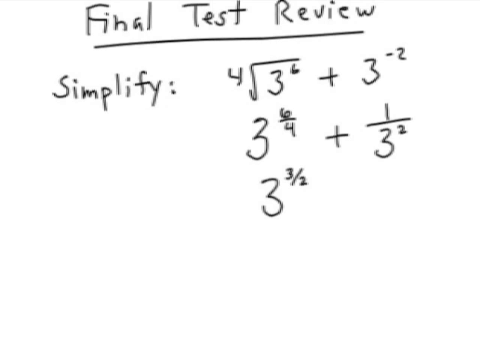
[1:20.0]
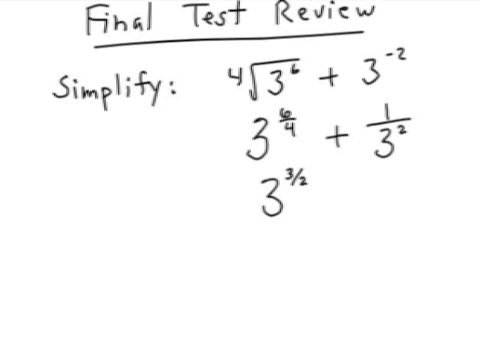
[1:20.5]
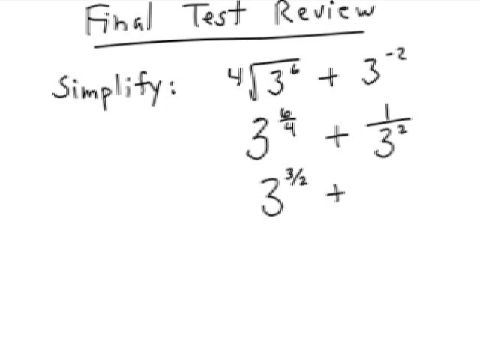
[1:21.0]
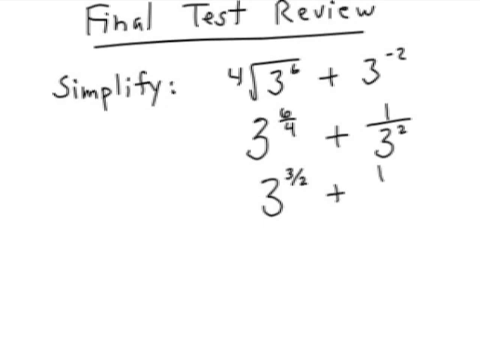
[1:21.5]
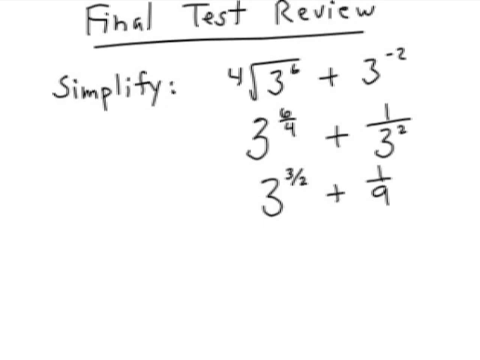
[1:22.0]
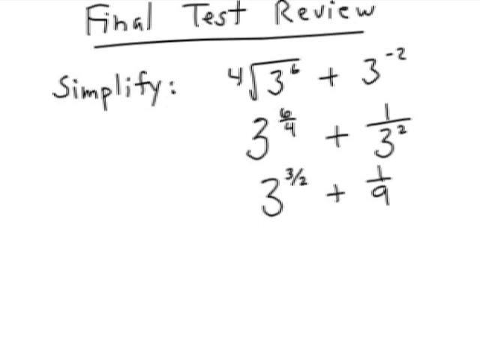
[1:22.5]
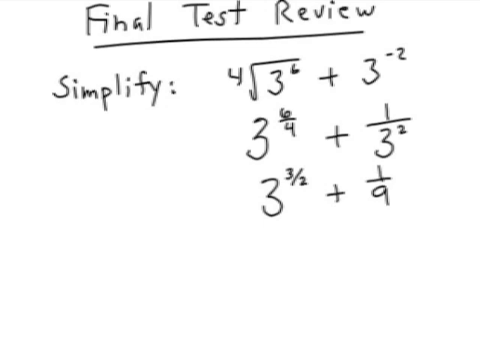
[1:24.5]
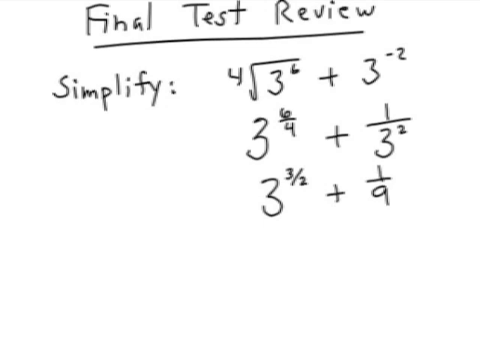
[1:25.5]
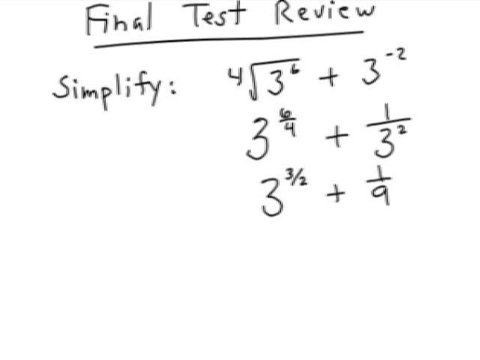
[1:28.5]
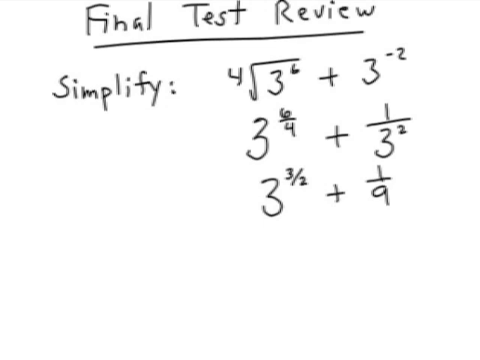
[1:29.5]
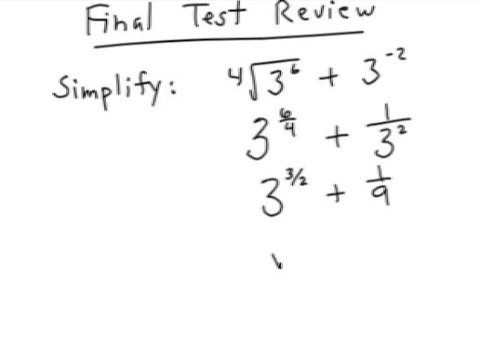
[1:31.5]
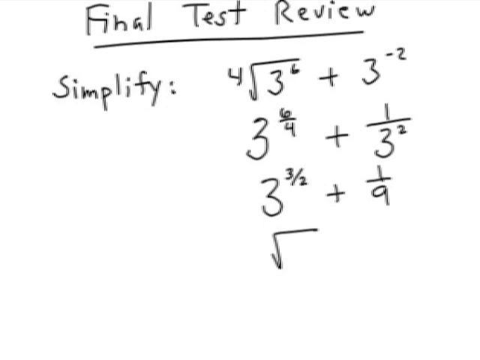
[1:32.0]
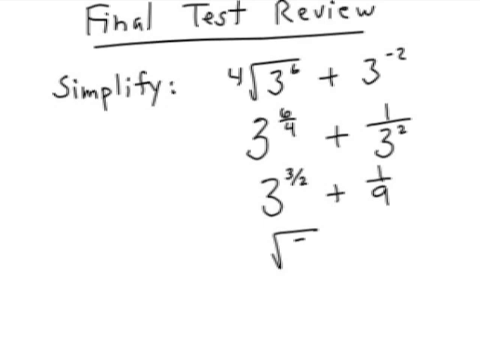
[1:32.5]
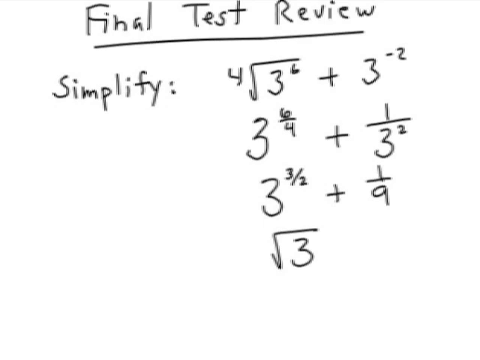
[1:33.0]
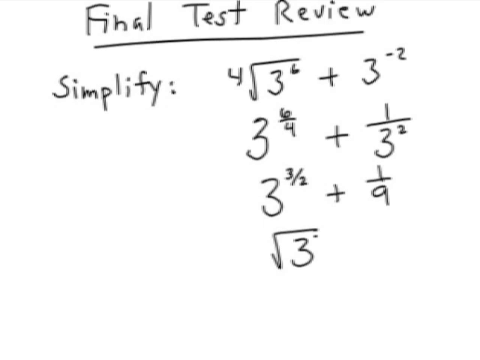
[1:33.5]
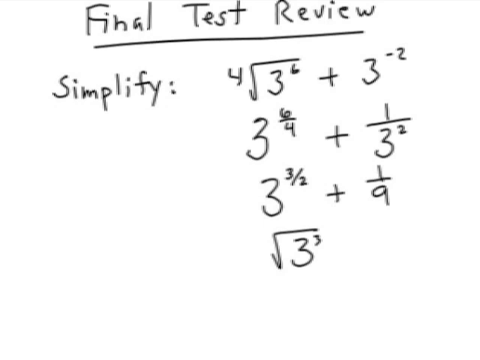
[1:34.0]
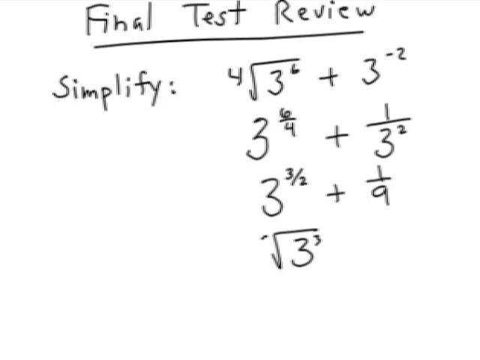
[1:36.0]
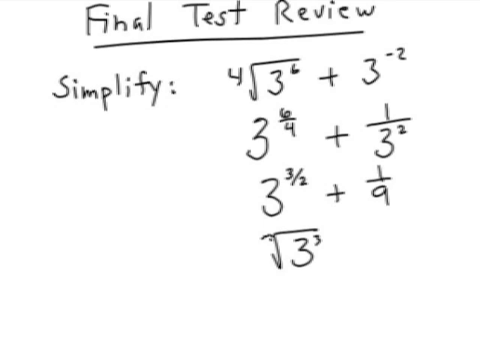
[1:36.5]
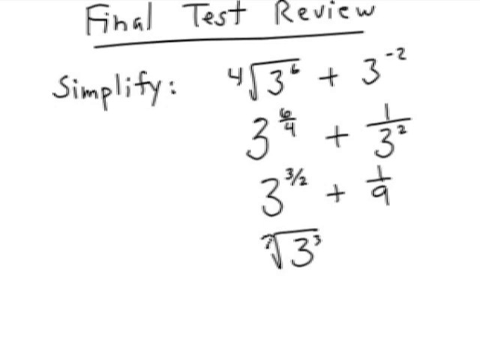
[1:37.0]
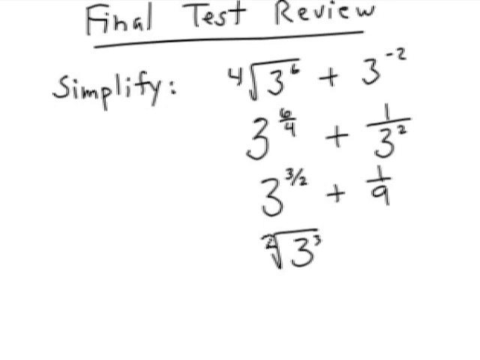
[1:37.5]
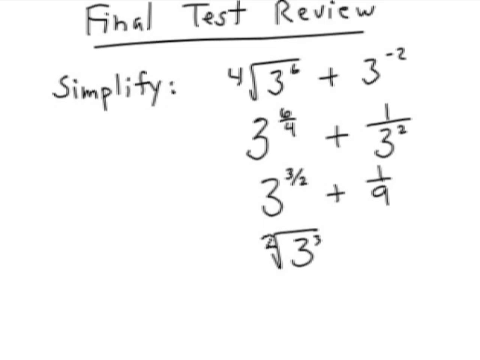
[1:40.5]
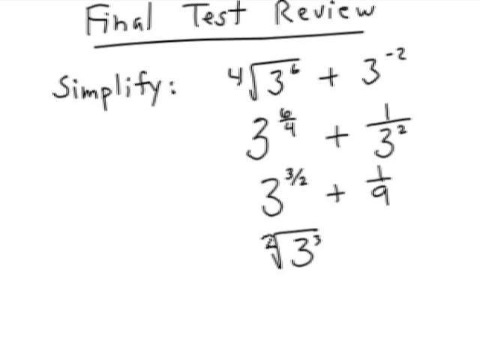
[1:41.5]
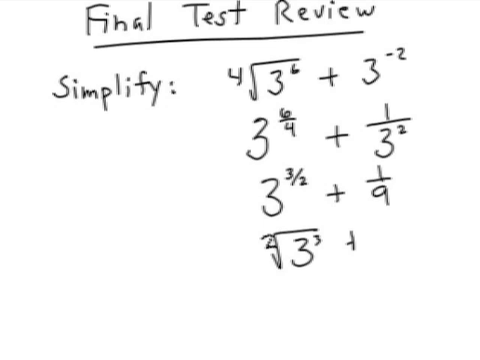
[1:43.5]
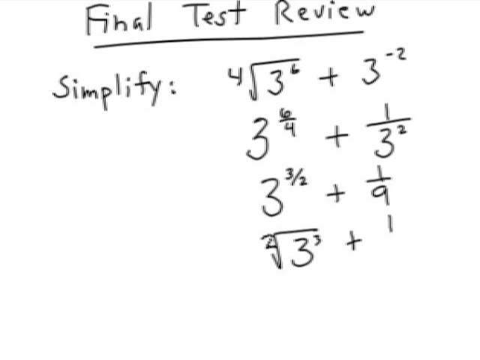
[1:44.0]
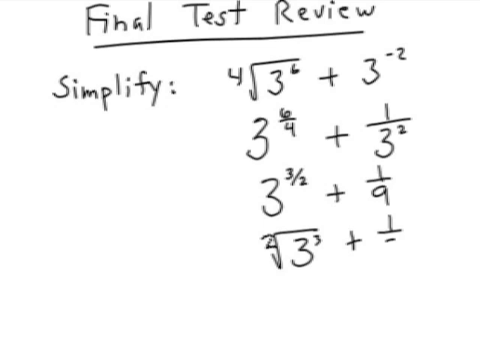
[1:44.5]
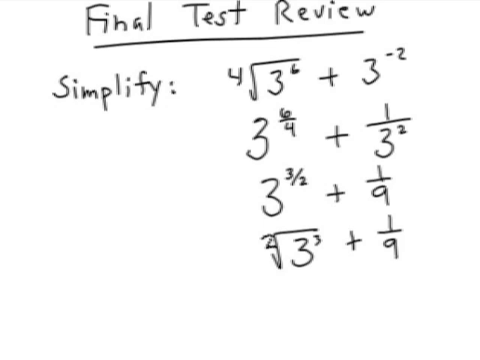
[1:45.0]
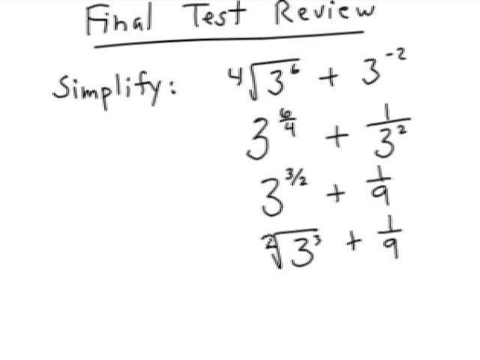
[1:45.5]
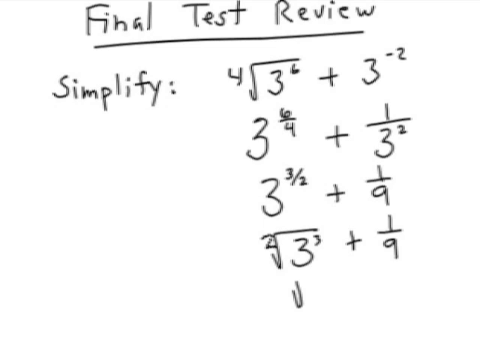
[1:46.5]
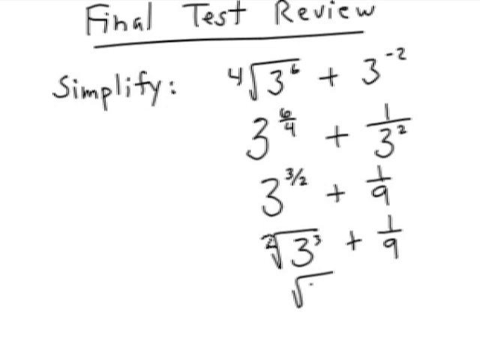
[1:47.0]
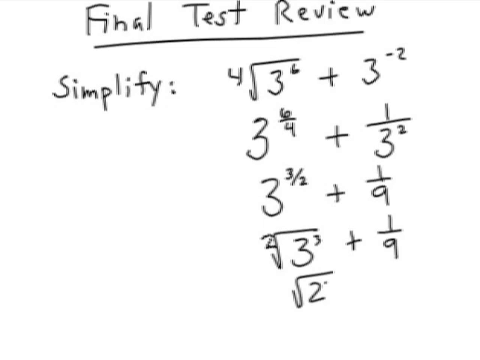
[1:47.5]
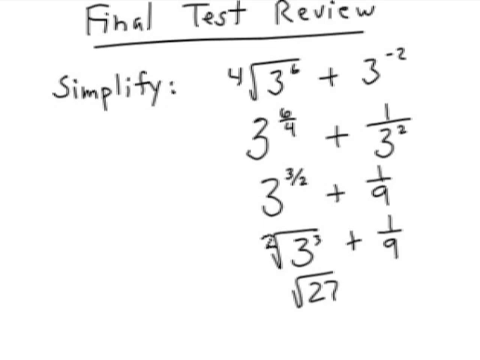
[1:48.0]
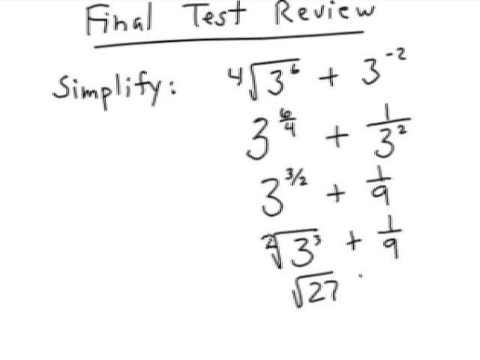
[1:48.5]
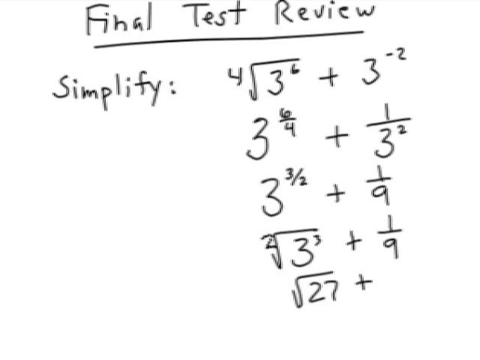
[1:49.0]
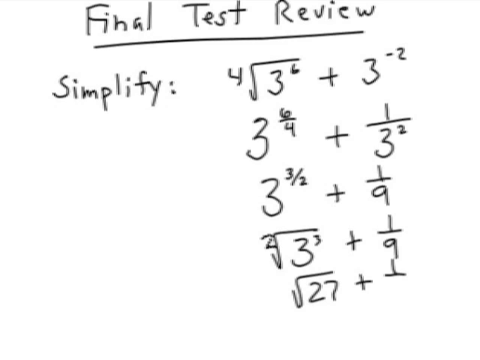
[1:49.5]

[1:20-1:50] A solid white background in the center is framed by two large black borders. Across the top, handwritten words in black read "final test review," underlined with a slightly wavy line. Underneath is "simplify" with a colon, a small space, and the problem 3 to the 6th plus 3 to the negative 2nd divided by 4. The work is already broken down into 3 with a 6 over a negative 4, and the next step adds the 3 to the negative 2 written as 1 over 3 to the 2nd. This is simplified to 3 times 3 over 2, plus 1/9. The work is then broken down again with a divide symbol, showing 3 to the 3rd divided by 2.